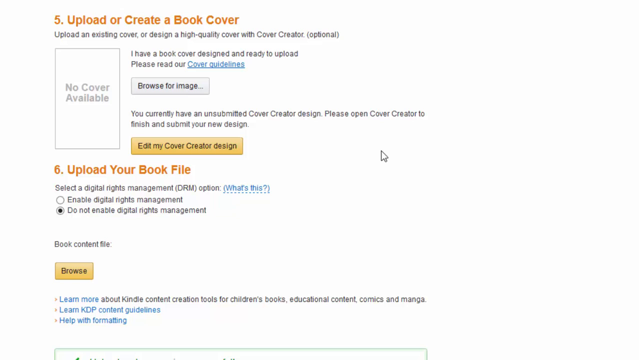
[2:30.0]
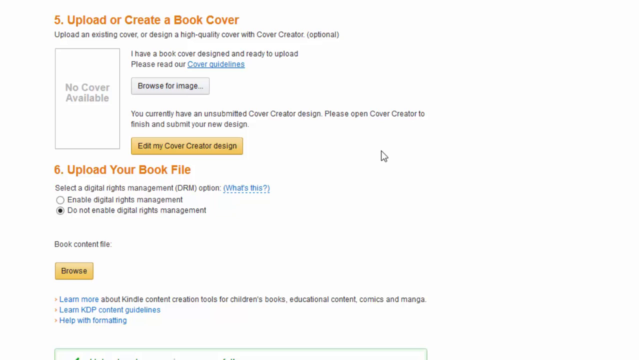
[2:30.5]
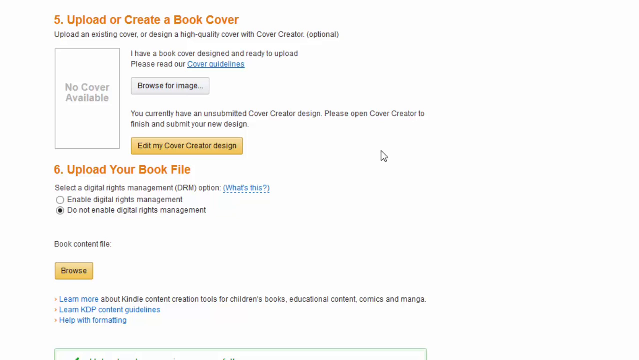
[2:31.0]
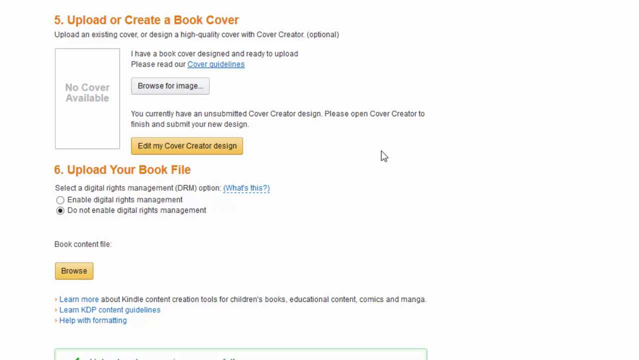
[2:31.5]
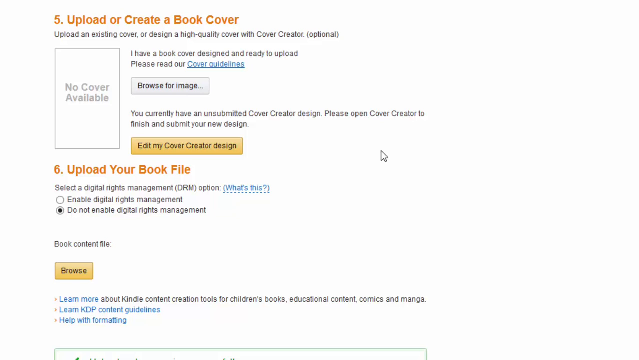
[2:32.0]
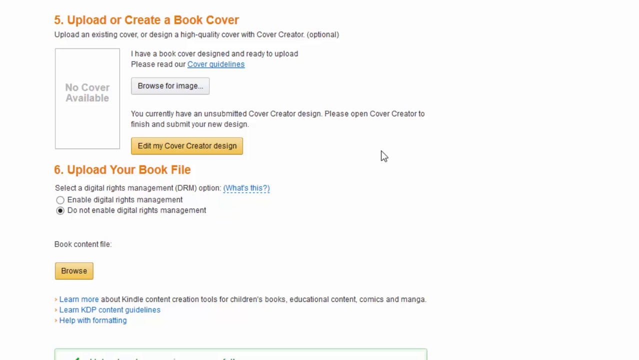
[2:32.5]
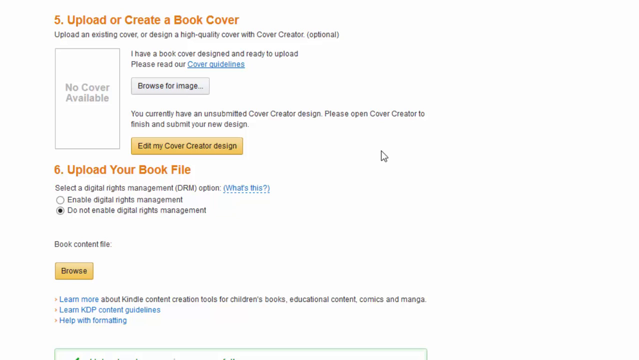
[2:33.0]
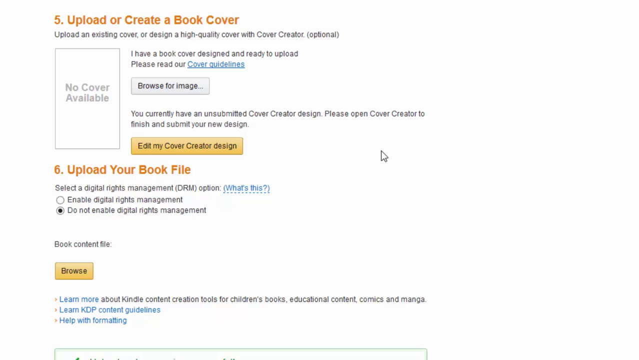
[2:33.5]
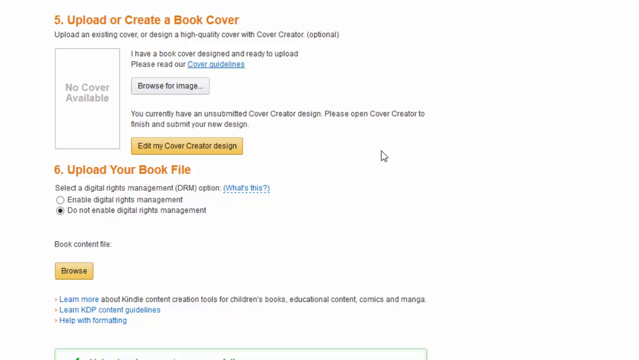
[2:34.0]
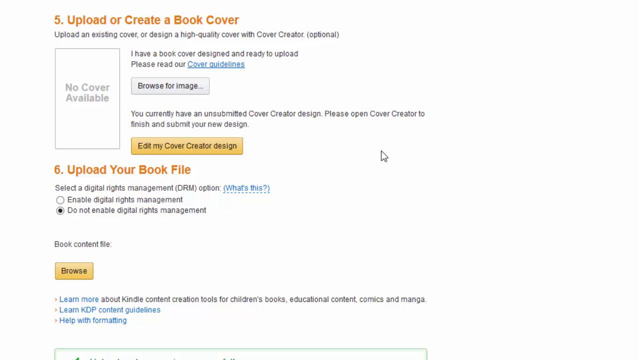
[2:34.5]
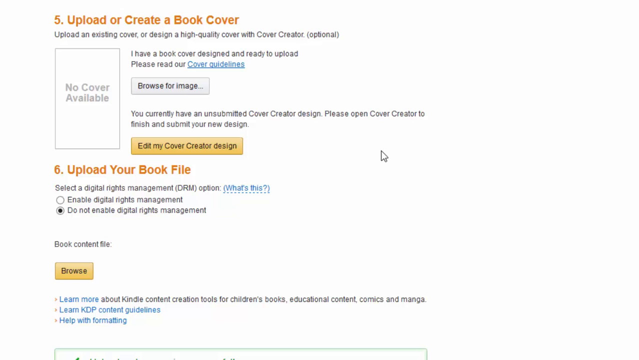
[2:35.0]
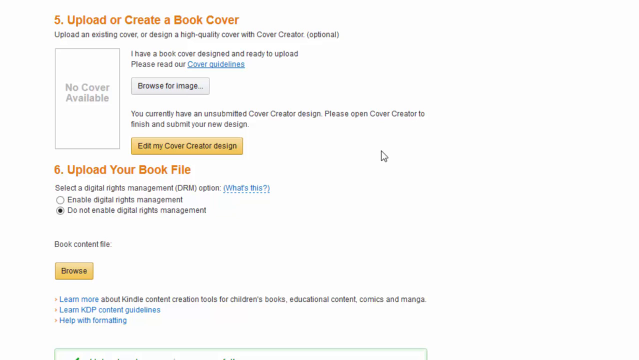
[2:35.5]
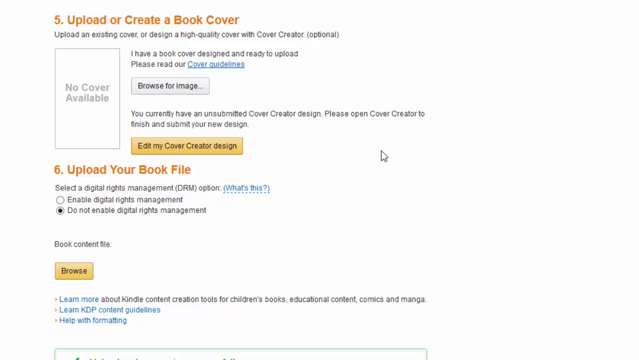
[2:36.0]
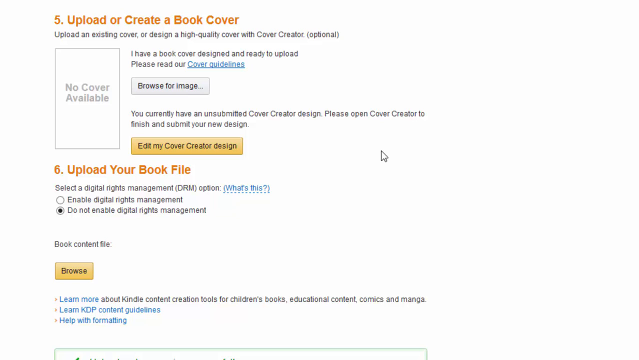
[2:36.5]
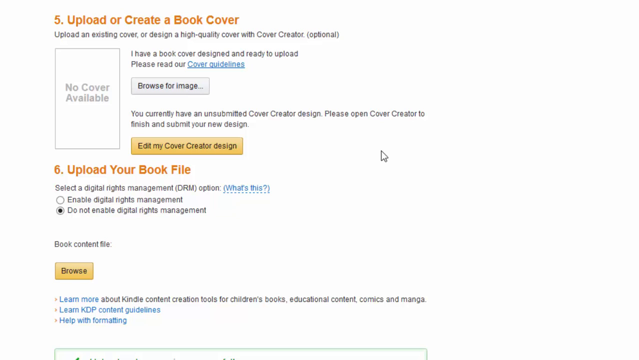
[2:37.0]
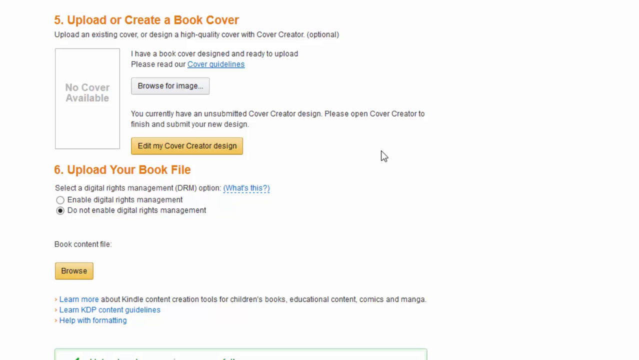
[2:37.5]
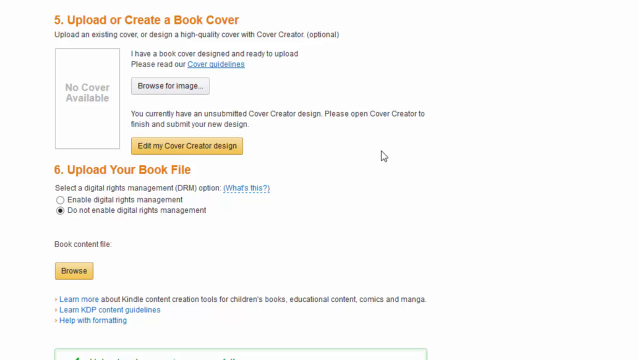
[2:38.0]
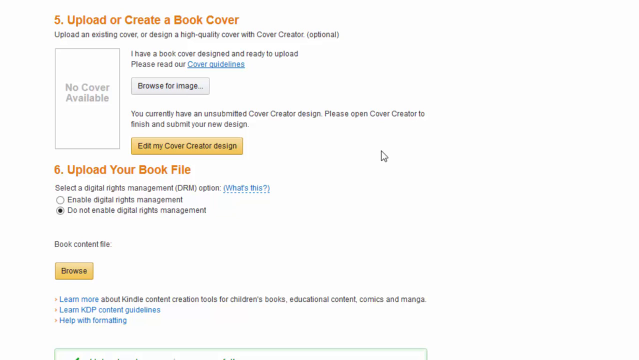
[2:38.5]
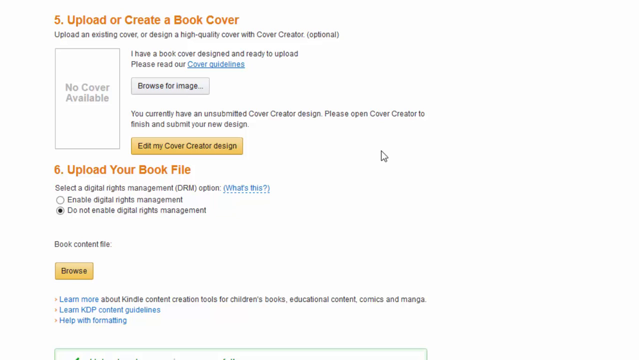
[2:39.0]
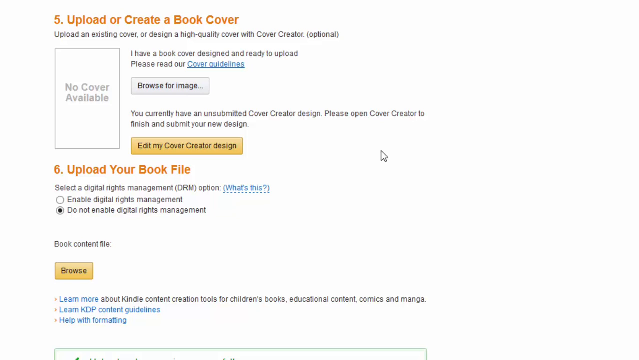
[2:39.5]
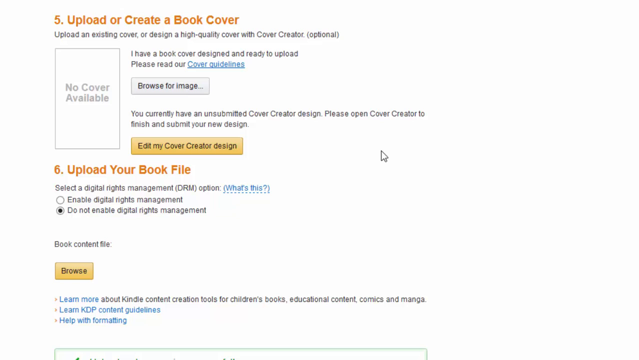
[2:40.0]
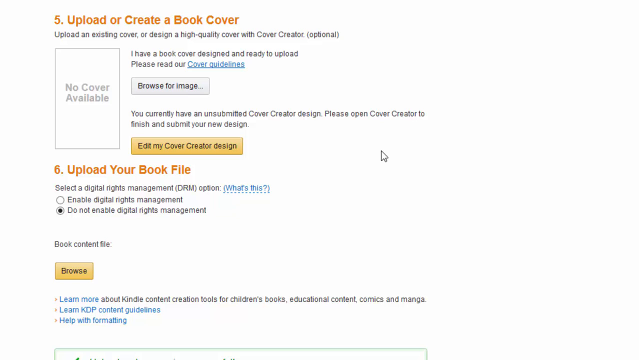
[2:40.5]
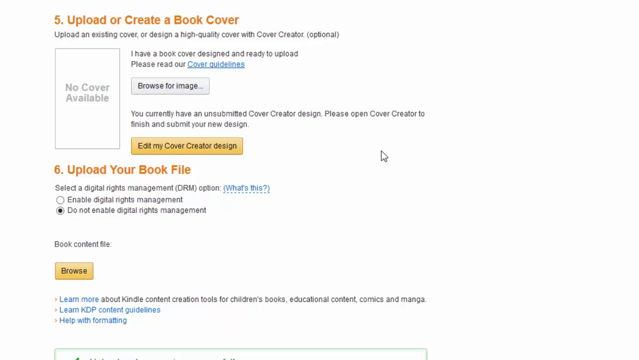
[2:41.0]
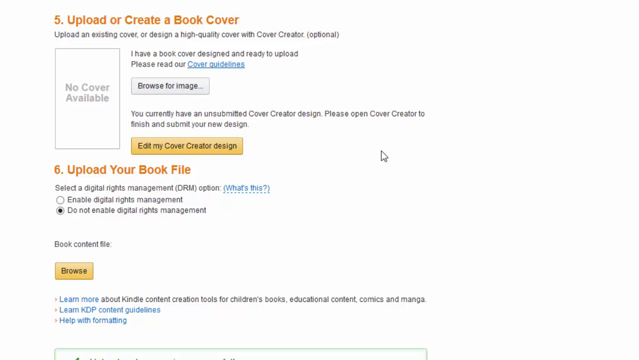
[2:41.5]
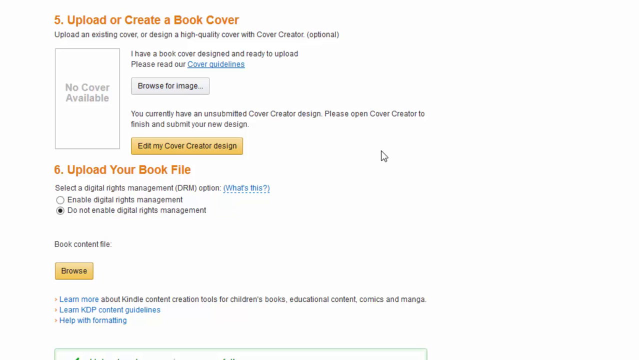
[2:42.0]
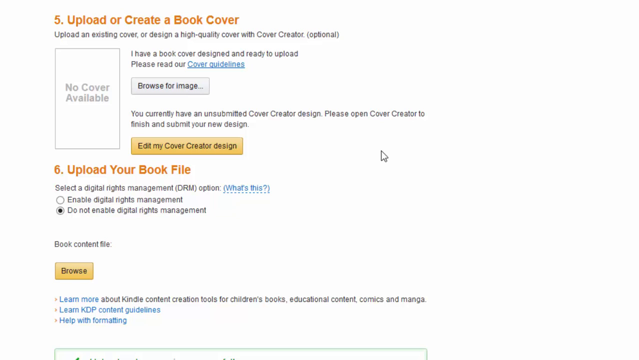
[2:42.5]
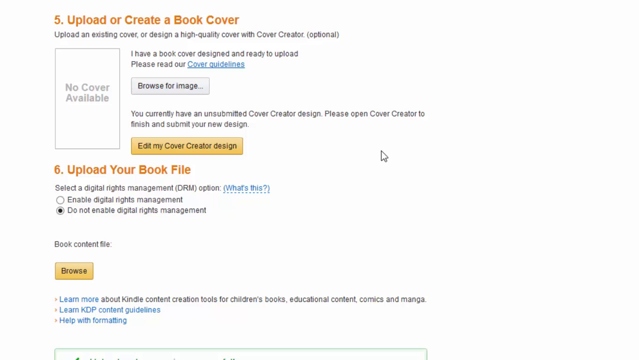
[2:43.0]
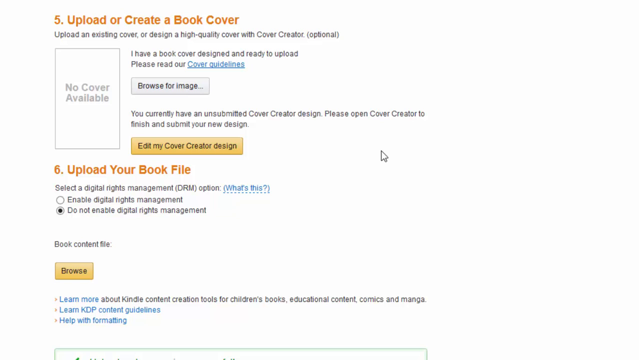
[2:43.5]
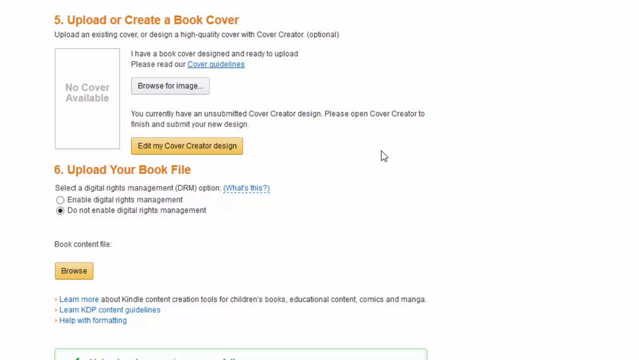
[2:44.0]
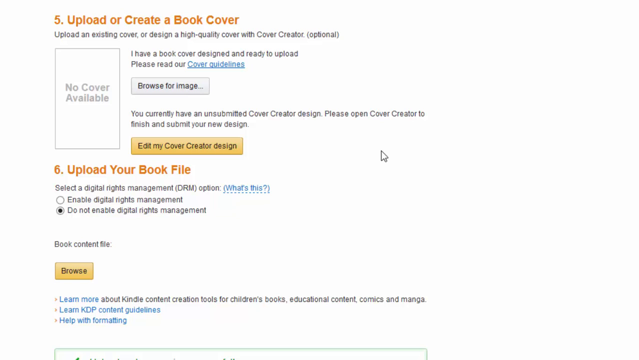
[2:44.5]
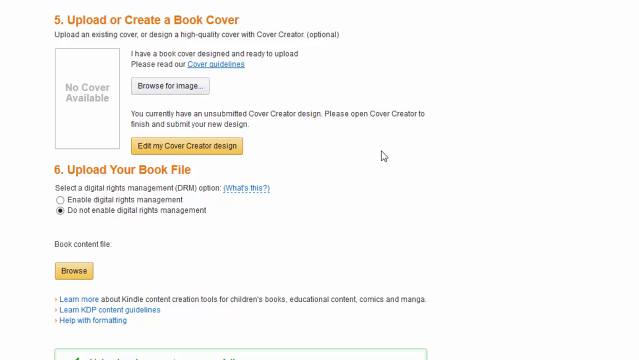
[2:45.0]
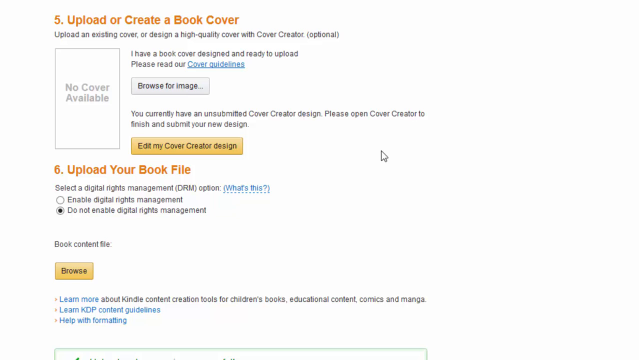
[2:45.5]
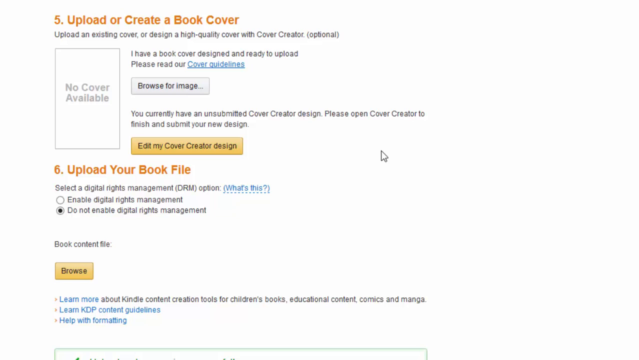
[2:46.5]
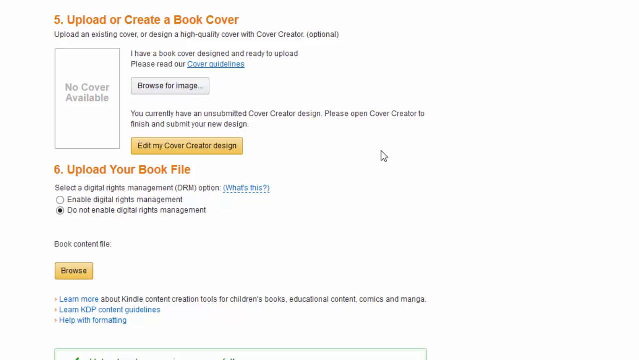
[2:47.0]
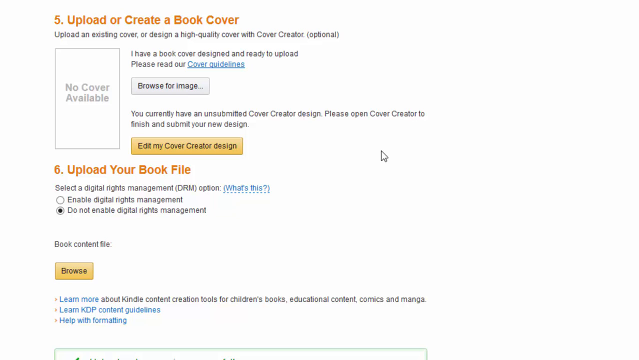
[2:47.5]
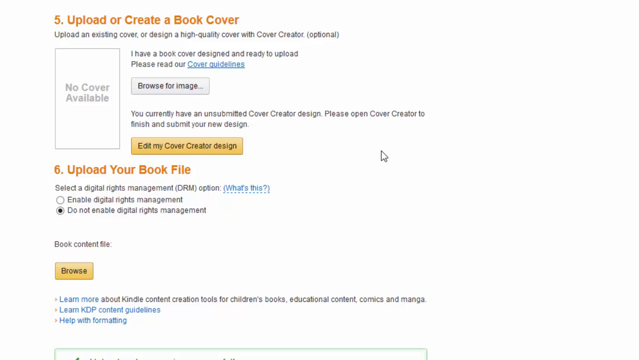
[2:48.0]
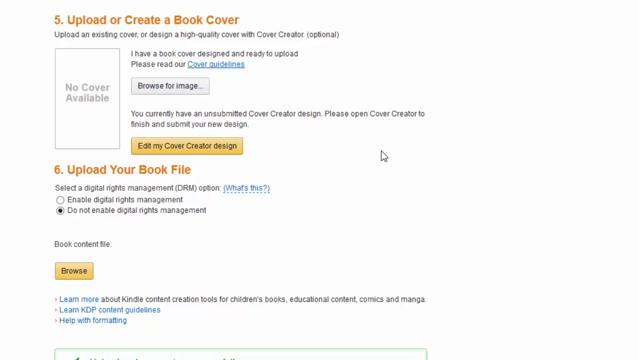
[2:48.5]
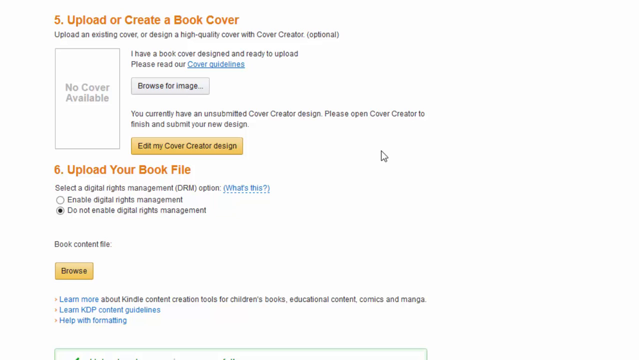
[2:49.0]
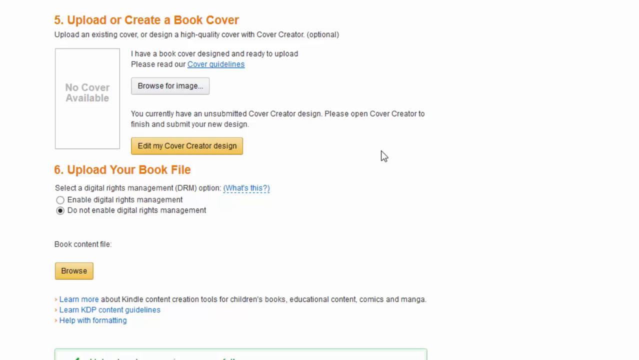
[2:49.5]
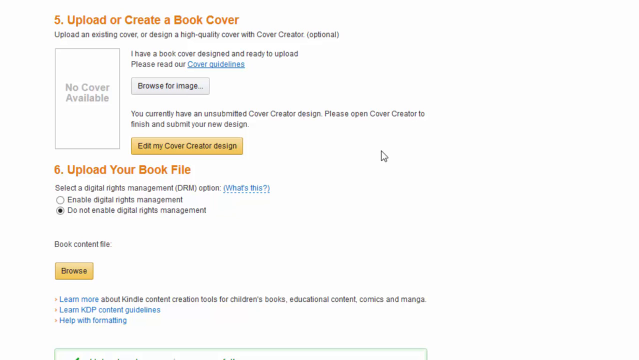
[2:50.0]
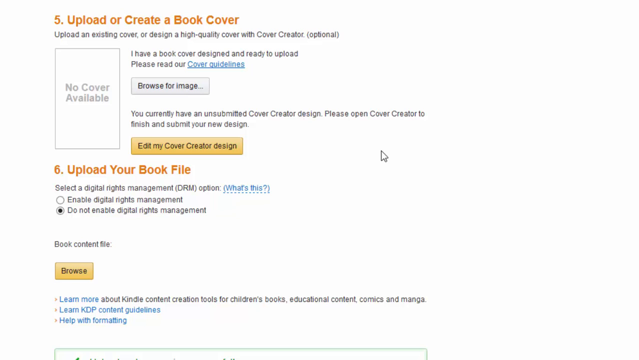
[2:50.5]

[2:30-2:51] The same main text page with "upload or create a book cover" and "upload your book file" remains static, with the pointer in the middle of the page, not moving. At the very bottom of the page are options reading "learn more about Kindle content creation tools for children's books, educational content, comics, and manga", "learn KDP content guidelines" and "help with formatting". The page still shows "you currently have an unsubmitted cover creator design. Please open cover creator to finish and submit your new design", with the "edit my cover creator design" button in the middle, still orange. Nothing changes. The page background is white, and the only colors are orange for the number five at the top, the number six in the middle, the "edit my cover creator design" button and the "browse" button, and blue for the two links on the page and another blue link at the bottom about content creation and KDP guidelines.